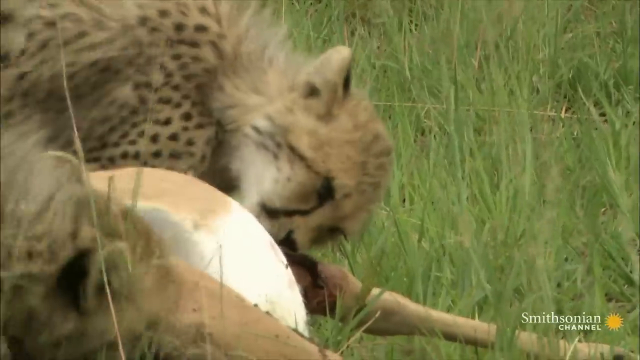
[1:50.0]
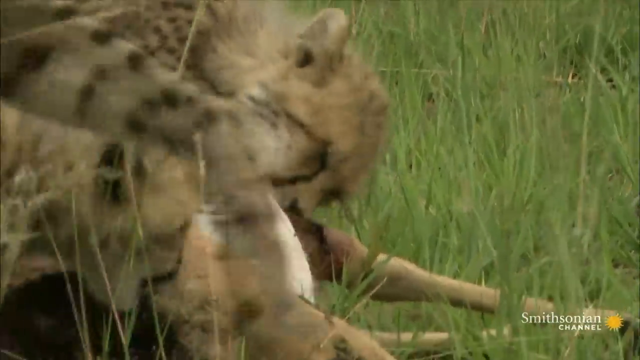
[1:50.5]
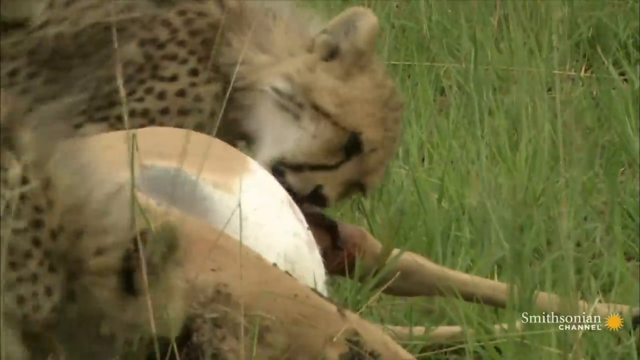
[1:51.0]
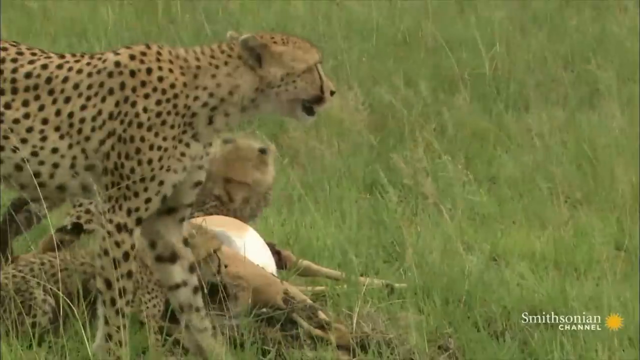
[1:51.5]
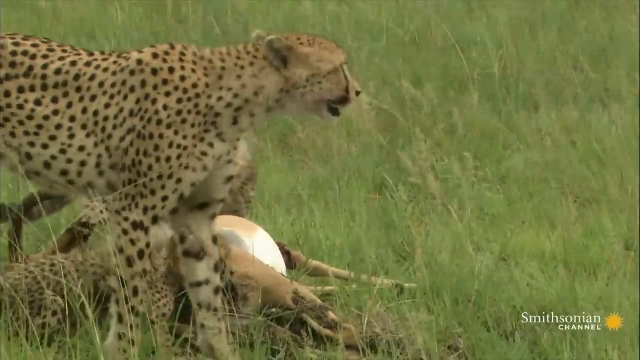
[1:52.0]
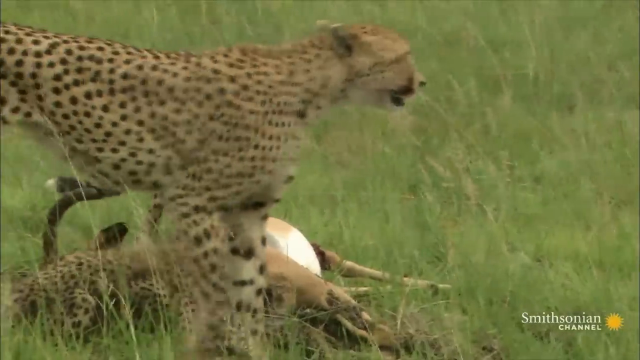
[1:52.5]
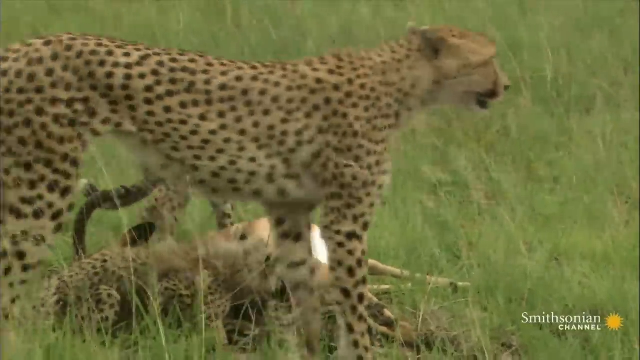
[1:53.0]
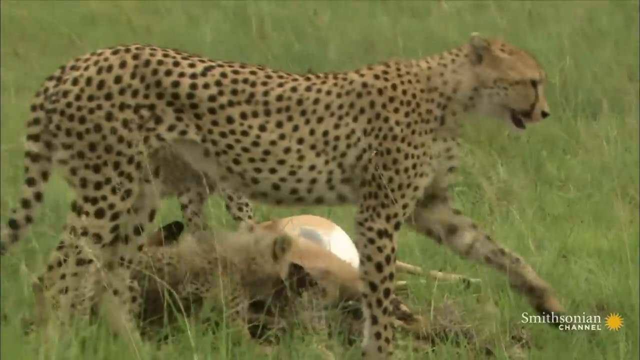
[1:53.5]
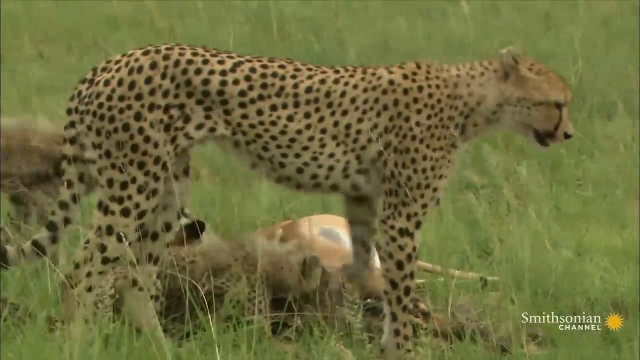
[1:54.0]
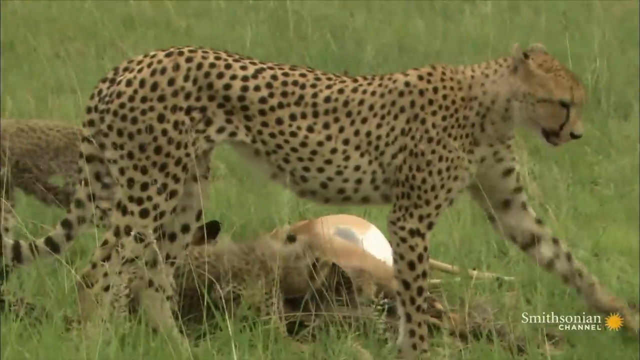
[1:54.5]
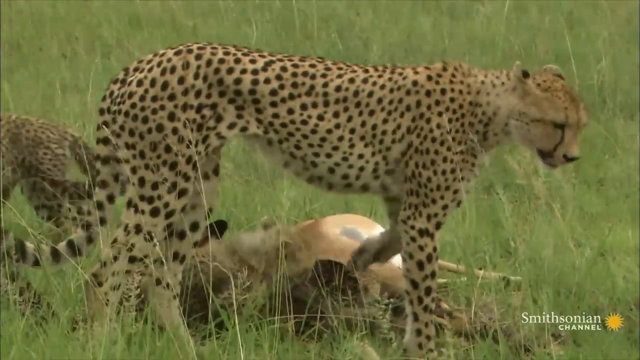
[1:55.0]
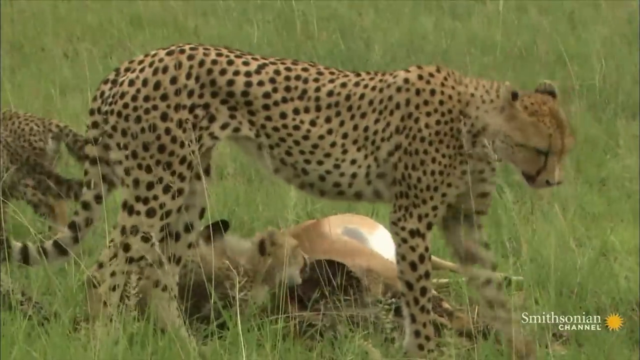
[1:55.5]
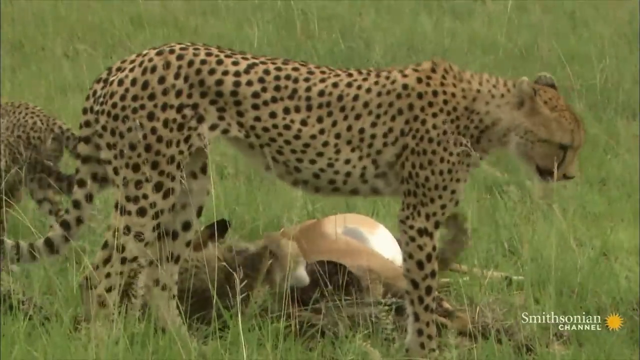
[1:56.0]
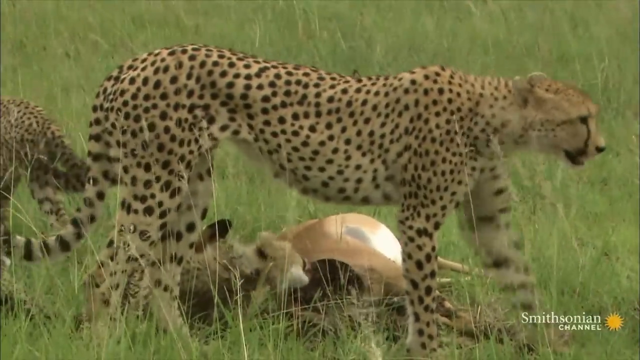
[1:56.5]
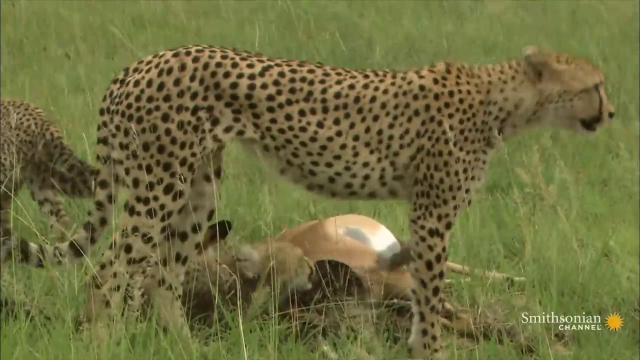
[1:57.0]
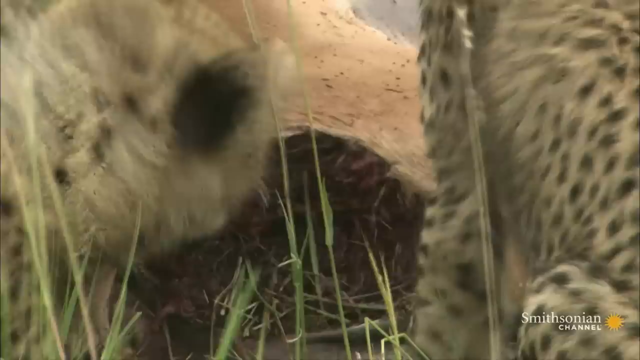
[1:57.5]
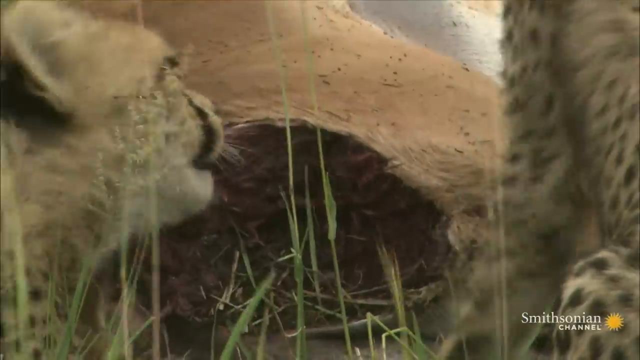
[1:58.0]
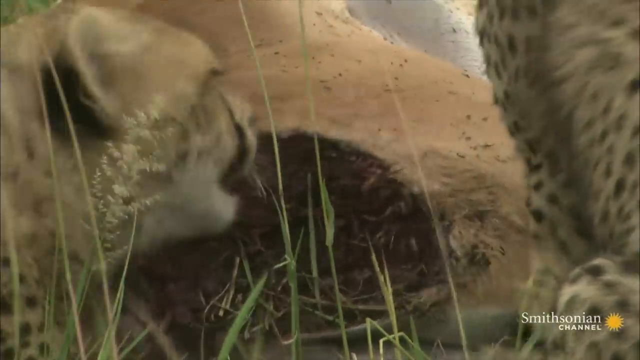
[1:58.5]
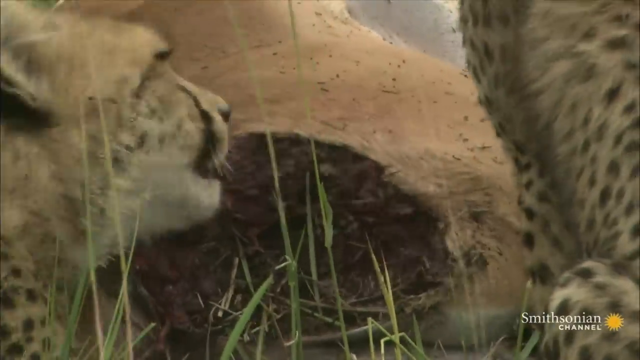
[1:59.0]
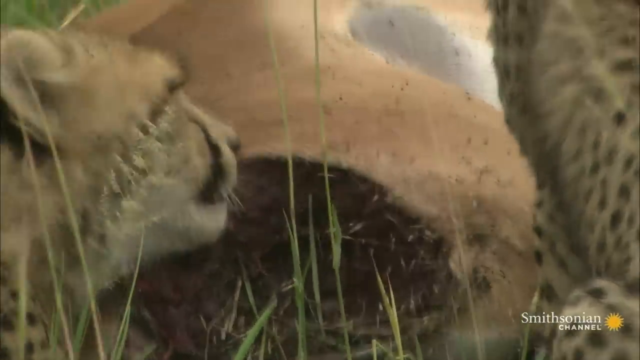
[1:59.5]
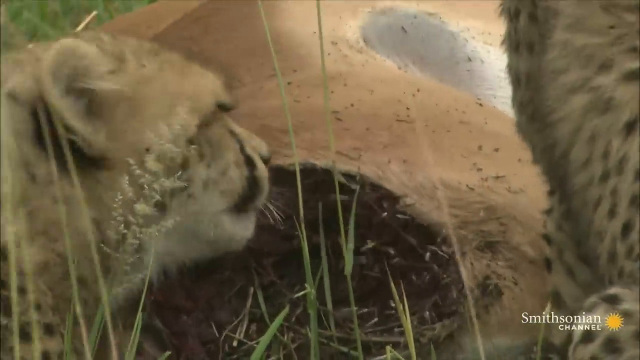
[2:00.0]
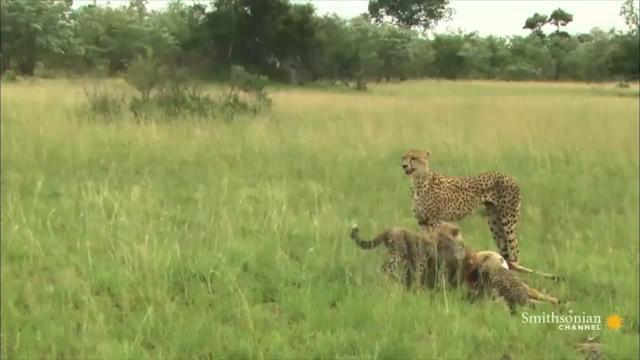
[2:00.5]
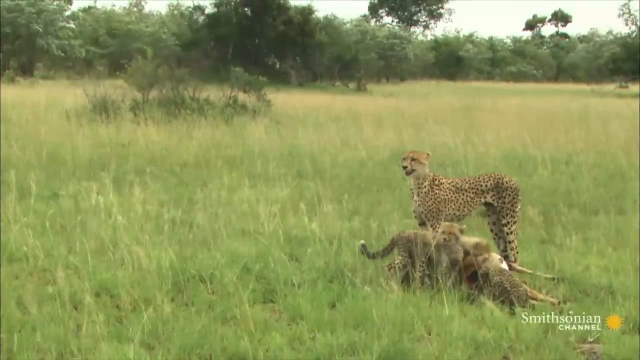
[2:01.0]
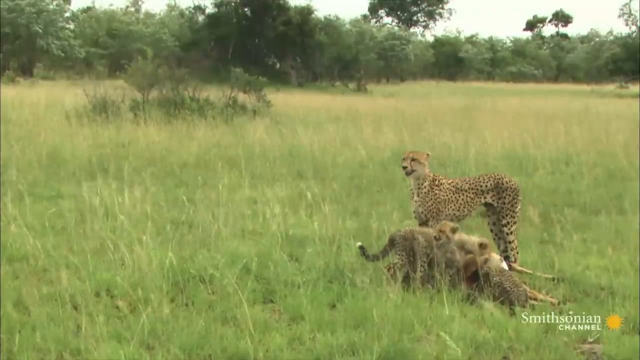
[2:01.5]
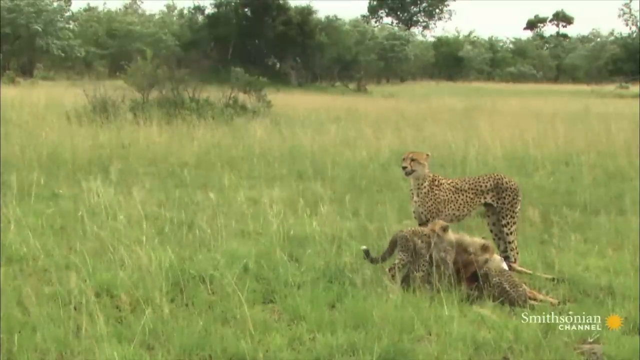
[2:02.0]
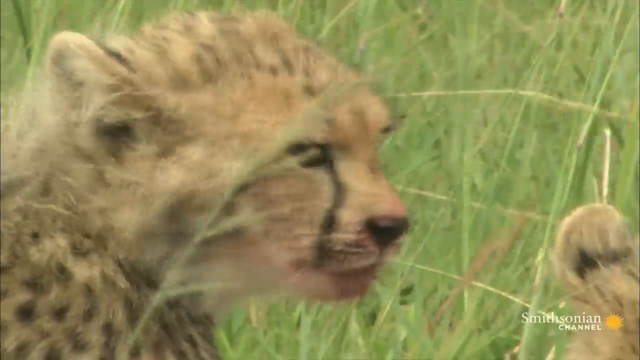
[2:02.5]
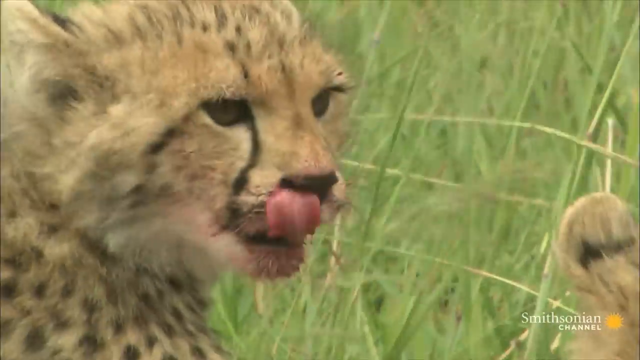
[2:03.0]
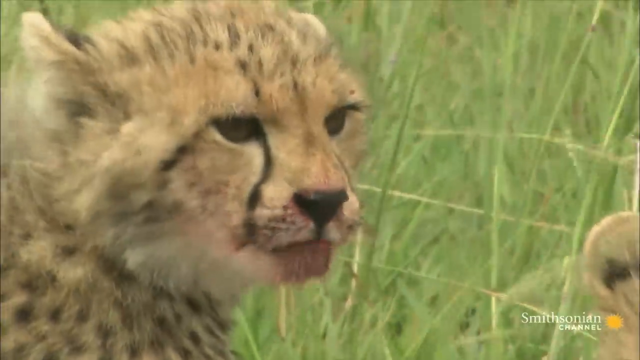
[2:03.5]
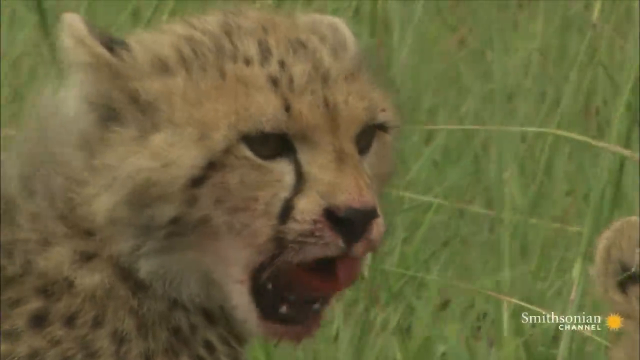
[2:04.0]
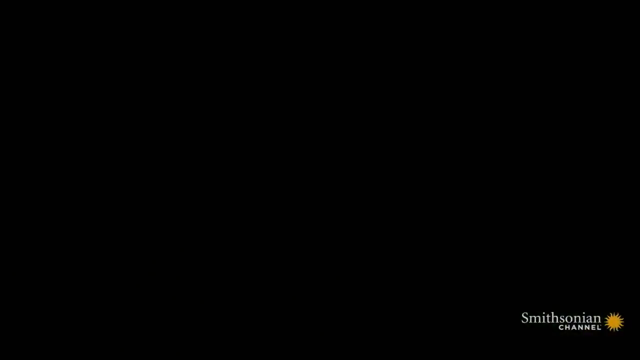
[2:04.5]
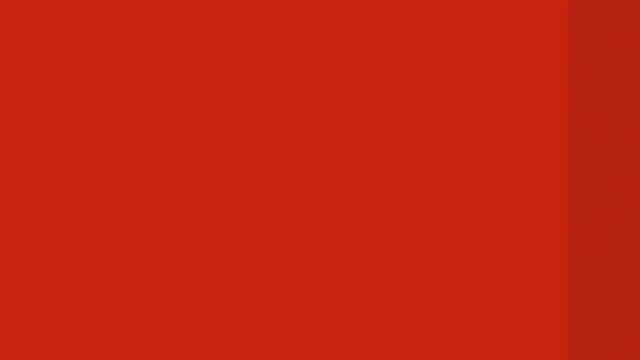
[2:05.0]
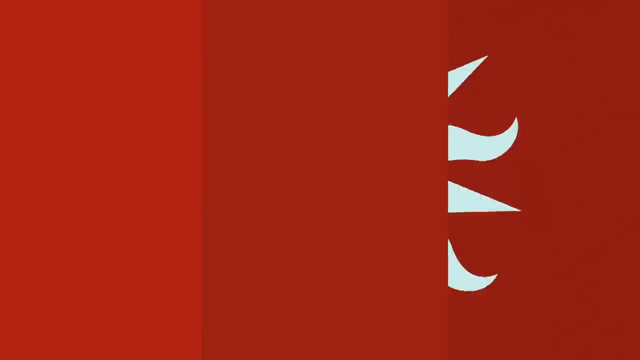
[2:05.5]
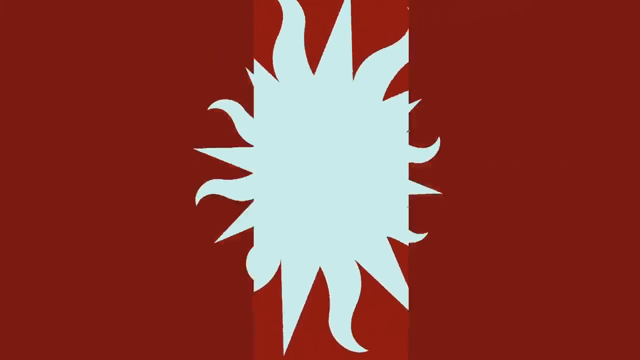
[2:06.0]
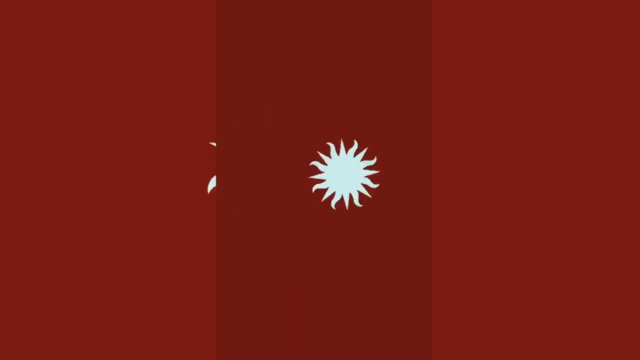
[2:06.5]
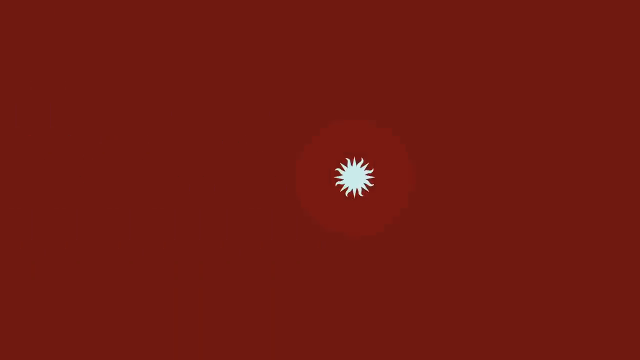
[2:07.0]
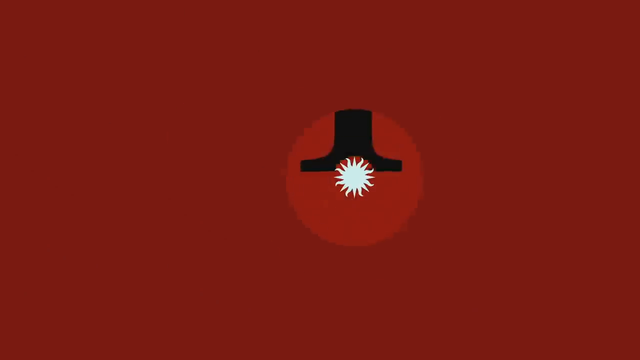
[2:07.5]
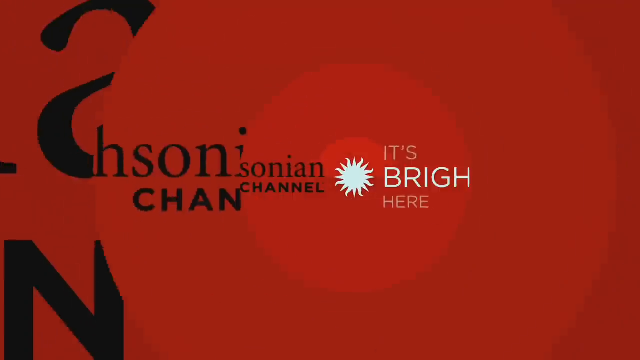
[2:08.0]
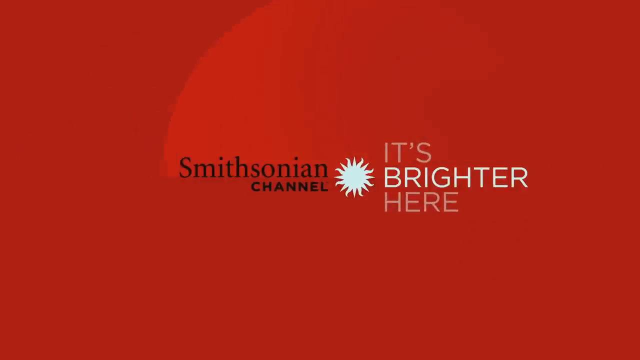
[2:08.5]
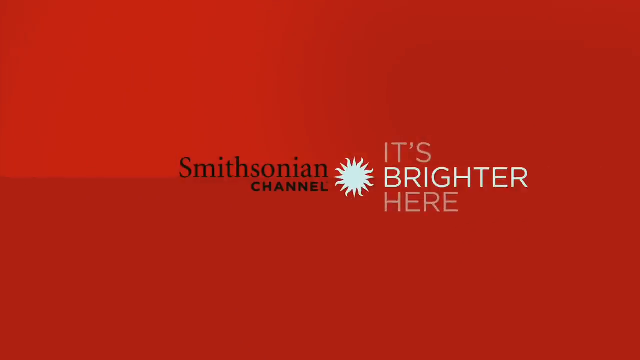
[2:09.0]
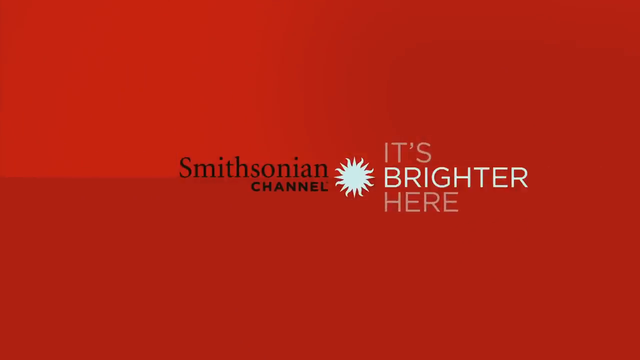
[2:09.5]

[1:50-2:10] The baby cheetahs are clearly biting at the impala. The mother stands over the impala and sort of looks like she is keeping watch while the babies eat; she does not eat, and is just sort of standing and looking around. She is still clawing at the ground with her left front paw. The babies seem happy as they bite at the impala, and a lot of blood is visible. A very close-up shot shows the babies eating the impala, and at the very end one of the babies licks its lips, showing blood all over its mouth.